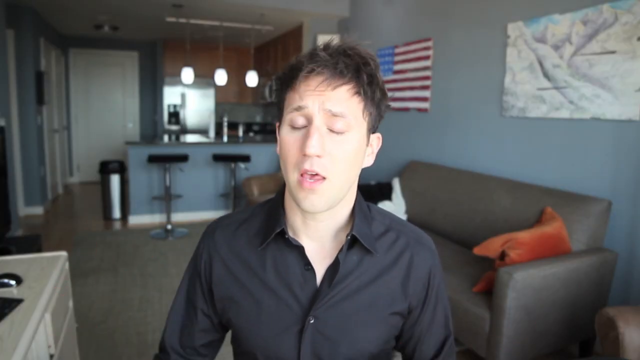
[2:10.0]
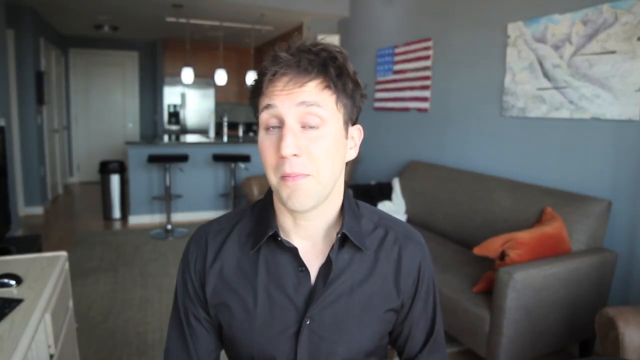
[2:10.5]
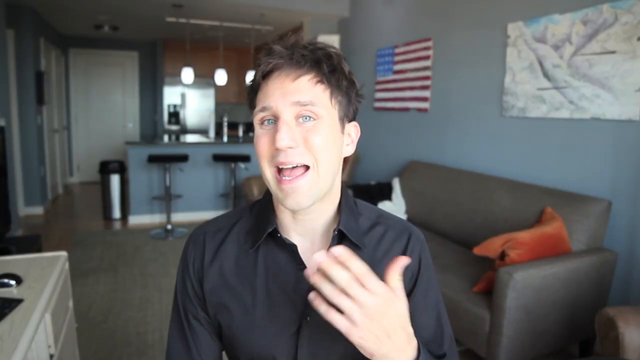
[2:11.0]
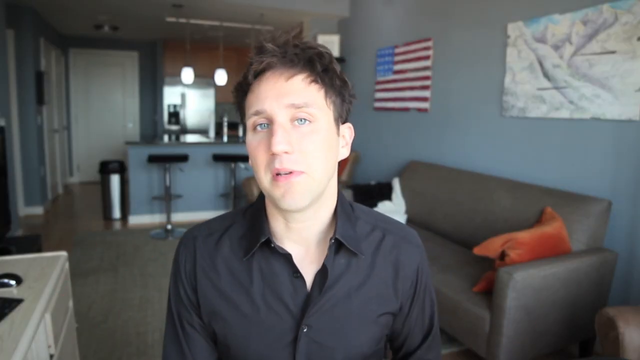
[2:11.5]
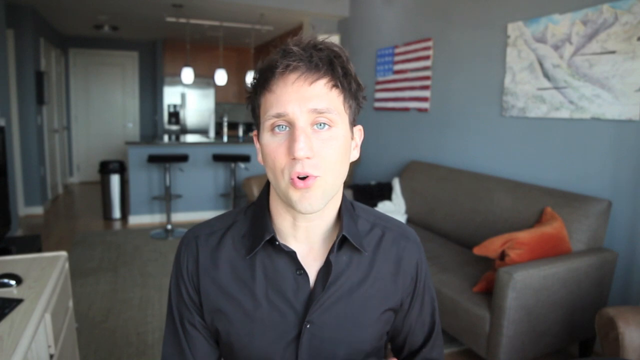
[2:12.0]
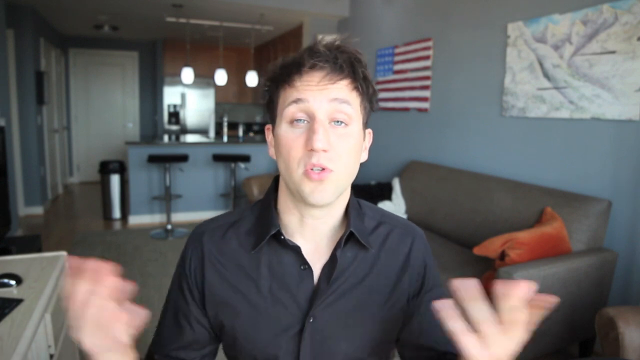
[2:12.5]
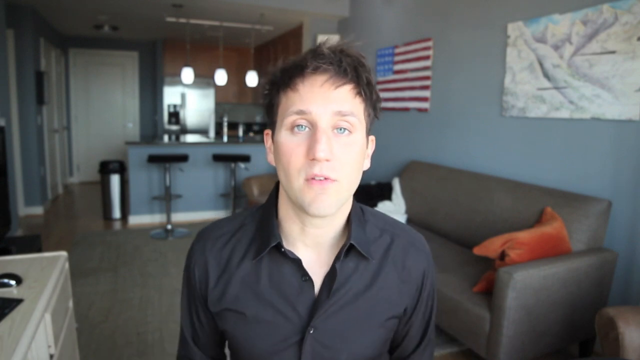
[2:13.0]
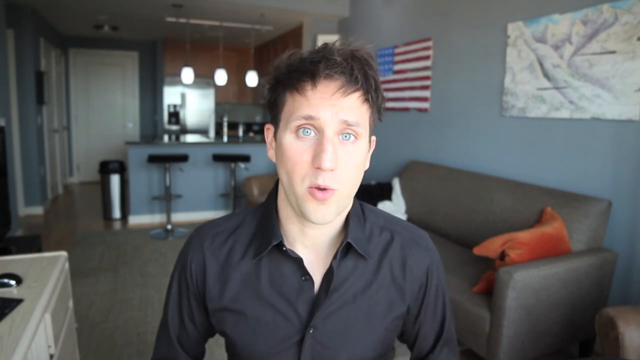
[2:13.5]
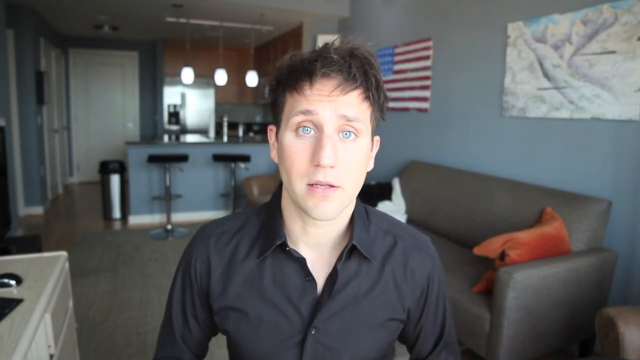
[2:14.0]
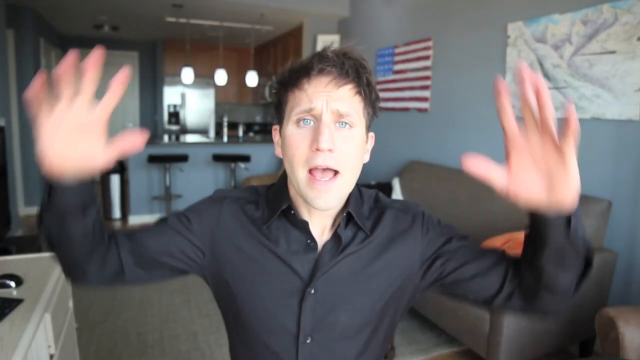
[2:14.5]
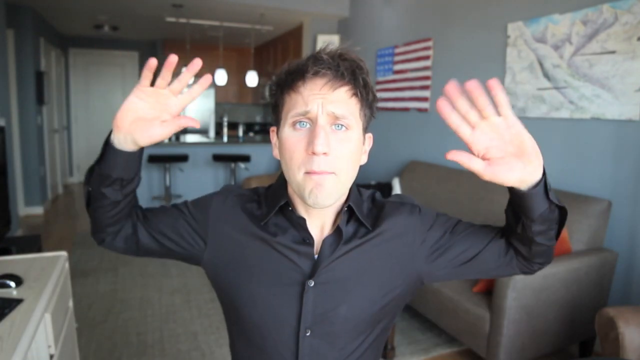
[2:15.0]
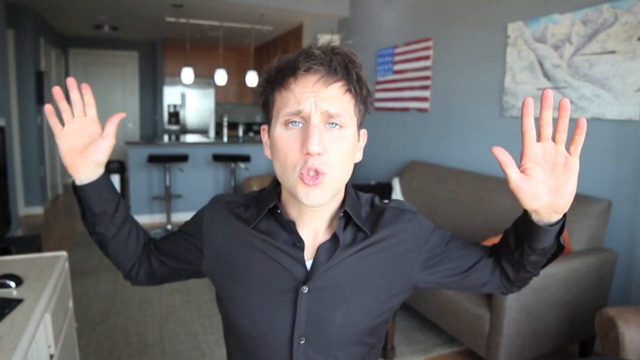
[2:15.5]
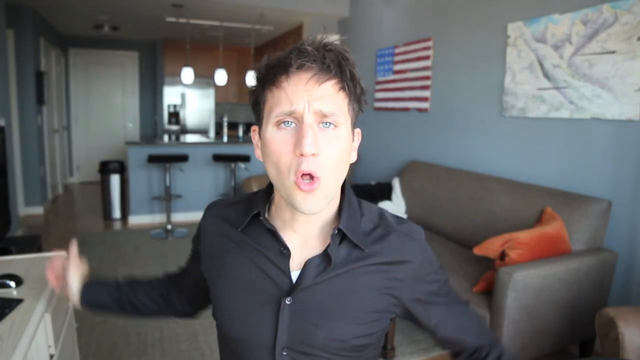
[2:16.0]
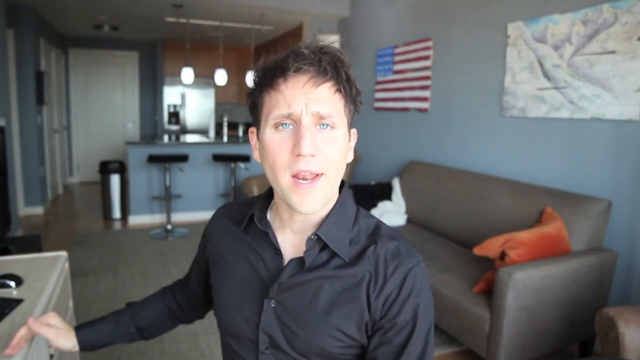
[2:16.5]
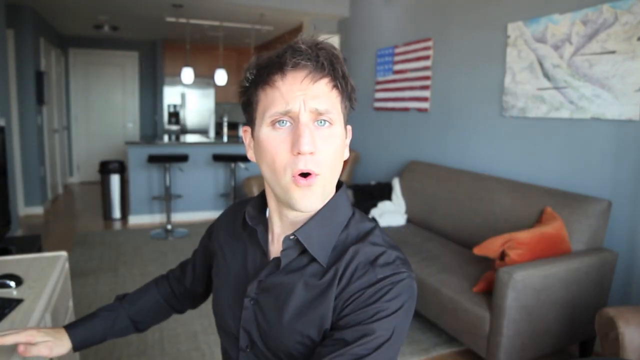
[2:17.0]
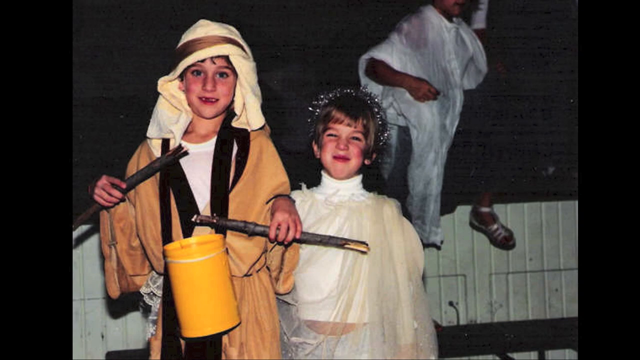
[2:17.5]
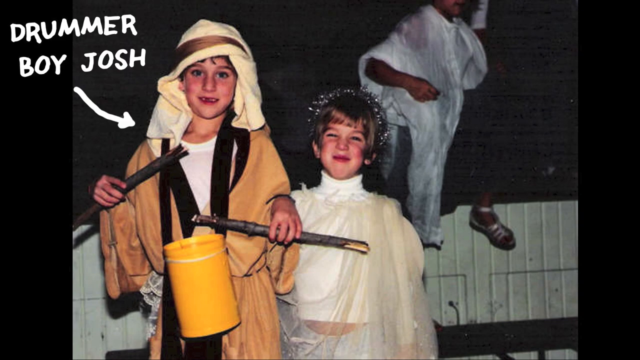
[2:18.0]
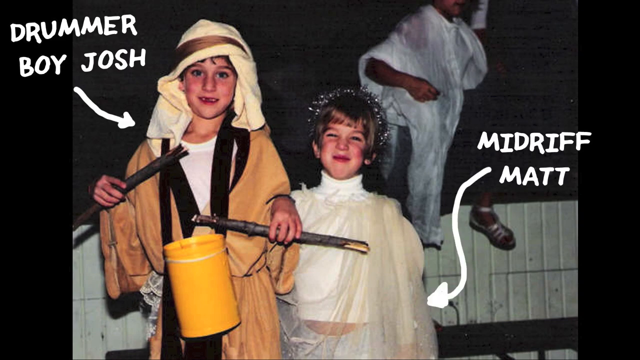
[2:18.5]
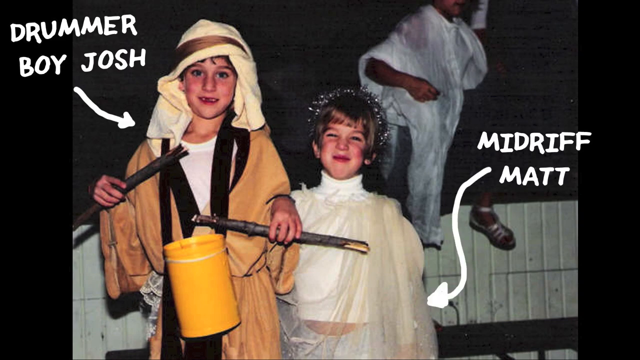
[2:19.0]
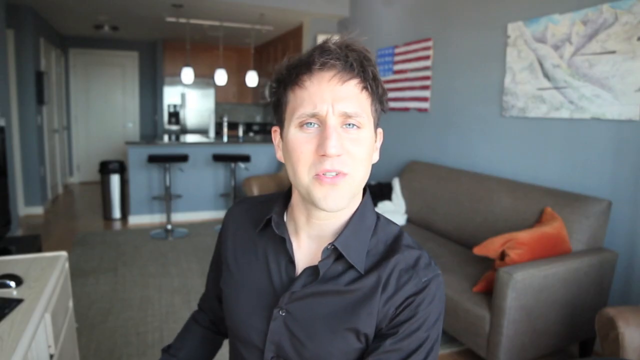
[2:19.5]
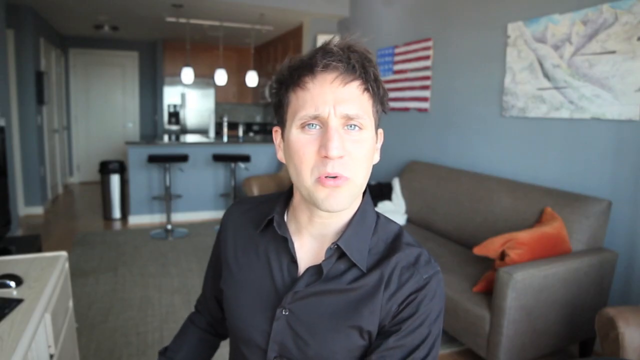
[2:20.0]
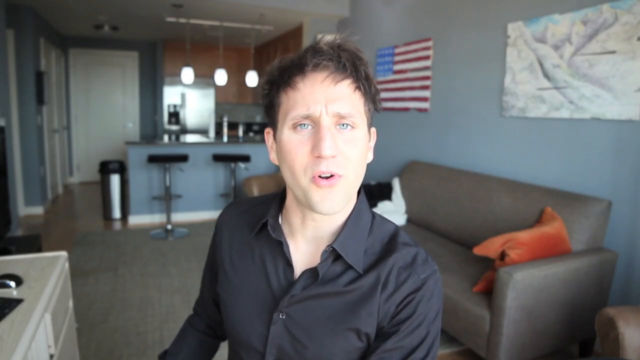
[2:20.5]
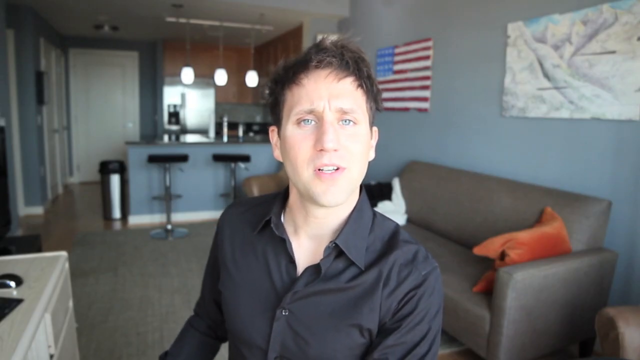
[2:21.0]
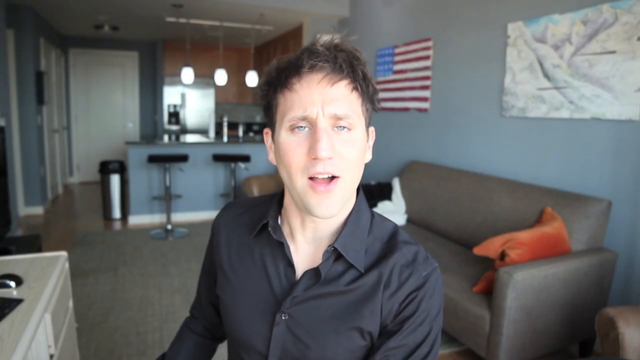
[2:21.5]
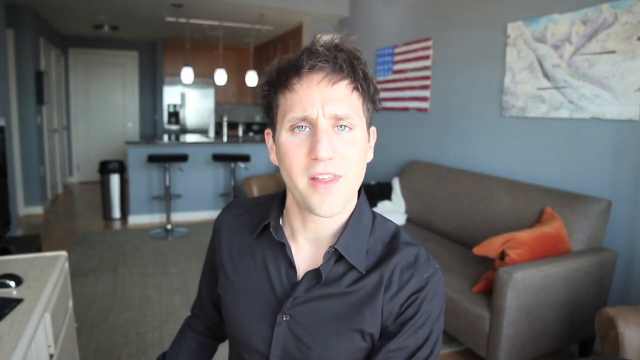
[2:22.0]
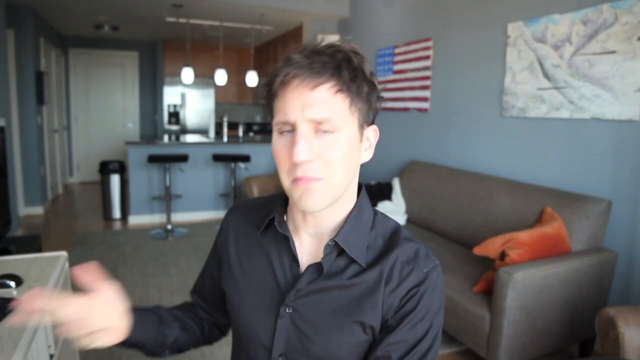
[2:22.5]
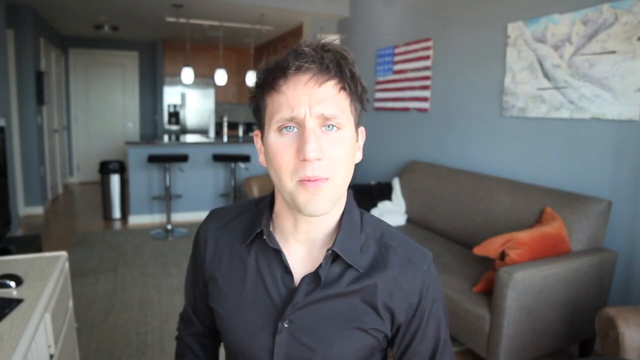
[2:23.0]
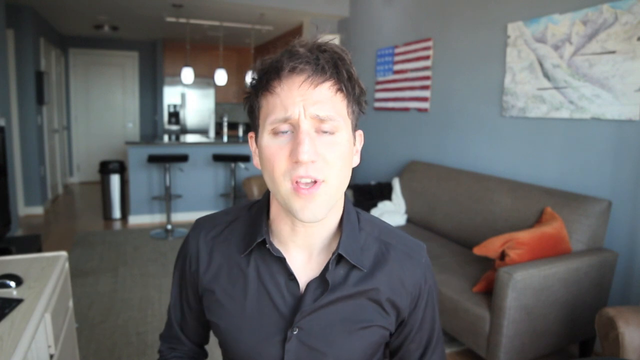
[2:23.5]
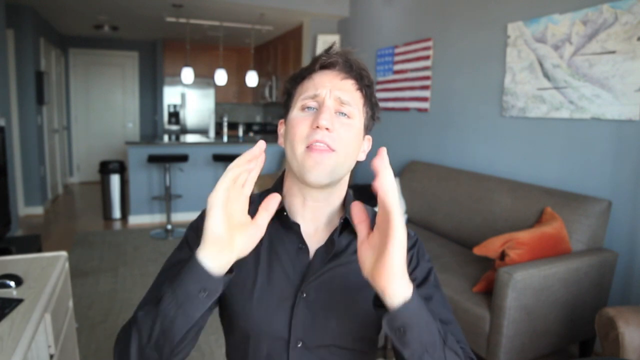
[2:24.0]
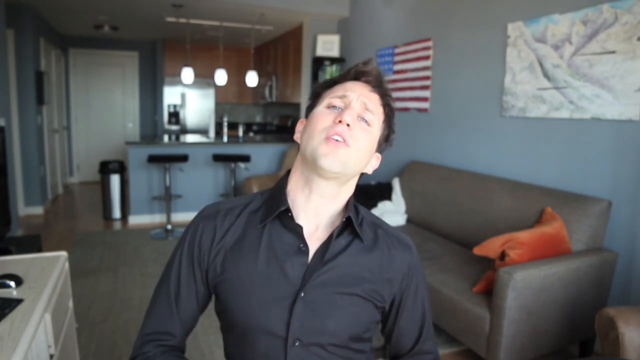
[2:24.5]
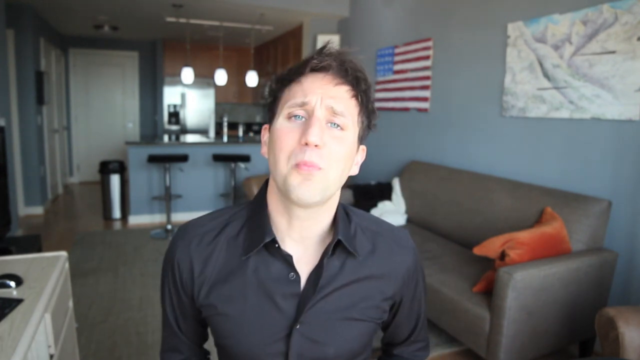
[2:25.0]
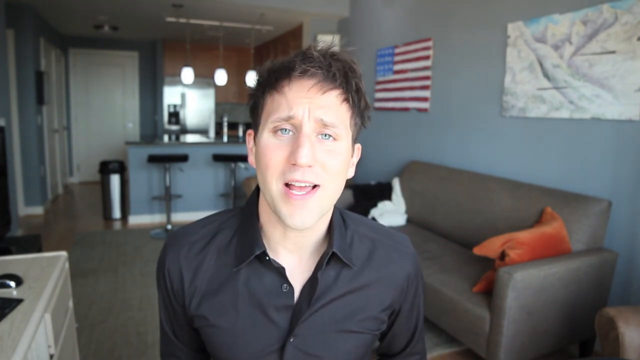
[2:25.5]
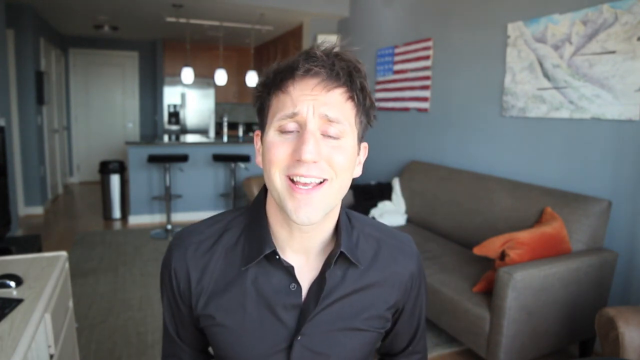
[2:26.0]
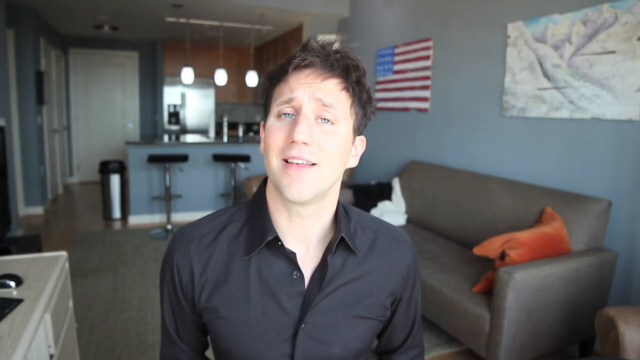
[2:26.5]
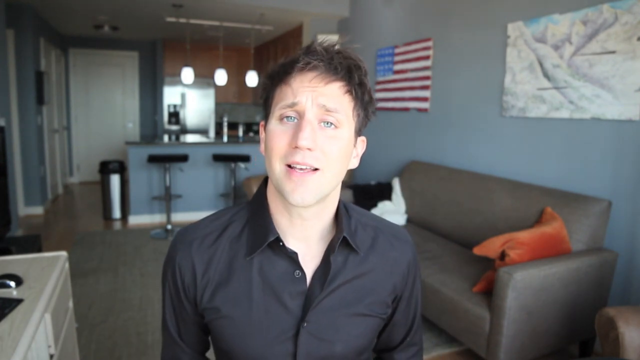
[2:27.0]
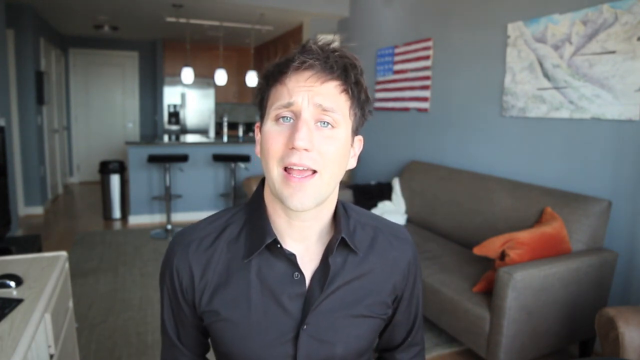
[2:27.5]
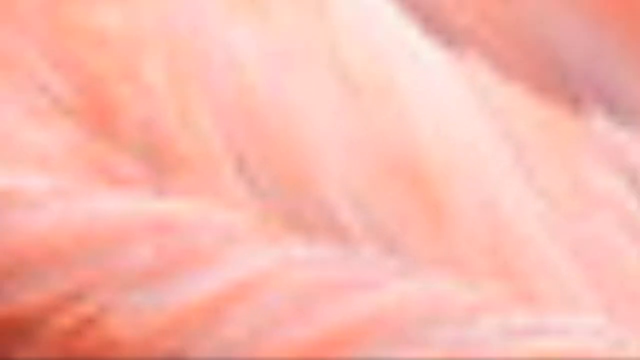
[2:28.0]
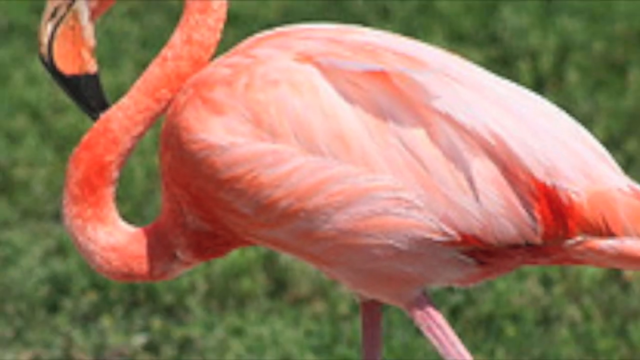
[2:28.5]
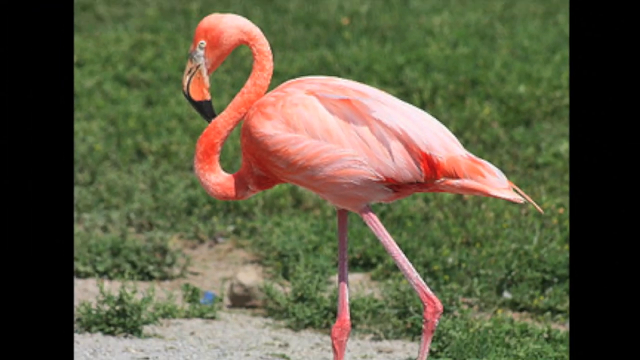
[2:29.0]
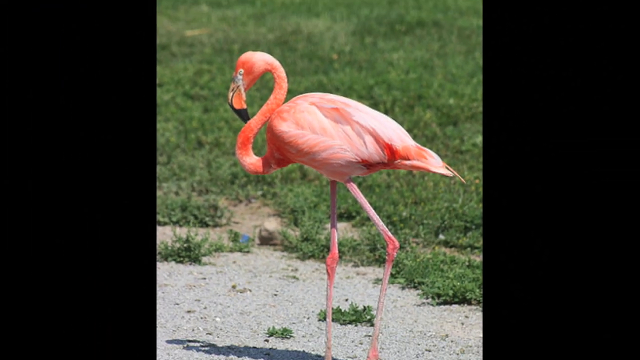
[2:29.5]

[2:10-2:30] A man in his mid-twenties gestures while telling a story, appearing to reminisce about childhood memories and seeming nostalgic. The apartment behind him has walls painted light blue and looks fairly bright, though not as bright as earlier in the video. The video cuts to a picture of him with a friend, both dressed as participants in a Christmas school play nativity scene, with white text indicating that the drummer boy is Josh and further white text about another person also in costume. It then cuts to a pink flamingo walking by some grass.